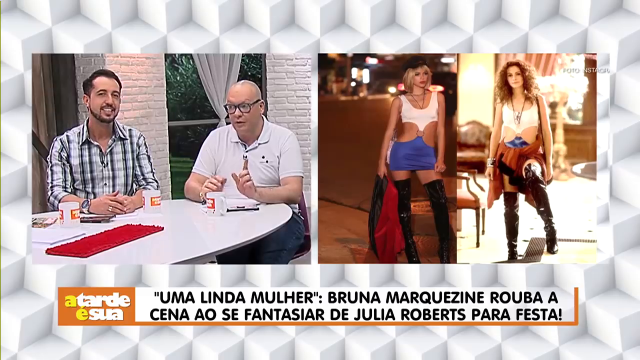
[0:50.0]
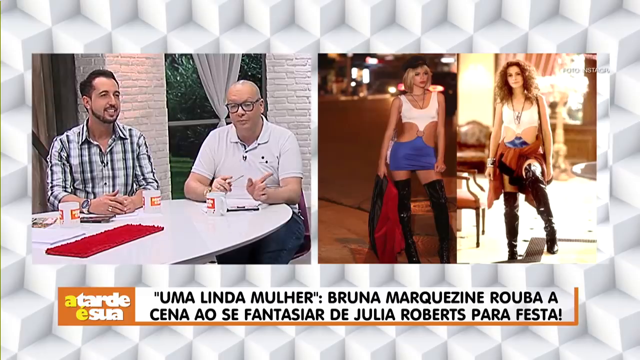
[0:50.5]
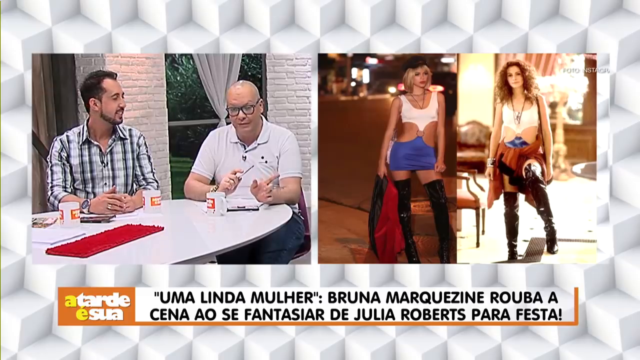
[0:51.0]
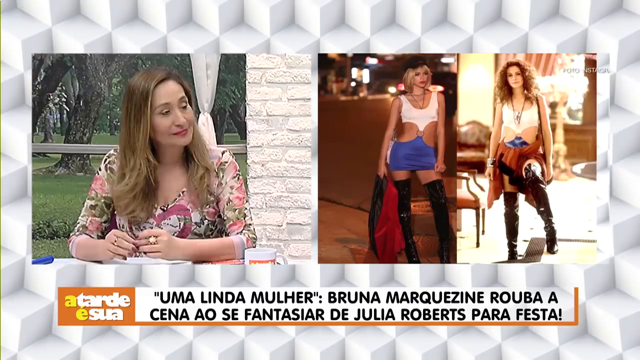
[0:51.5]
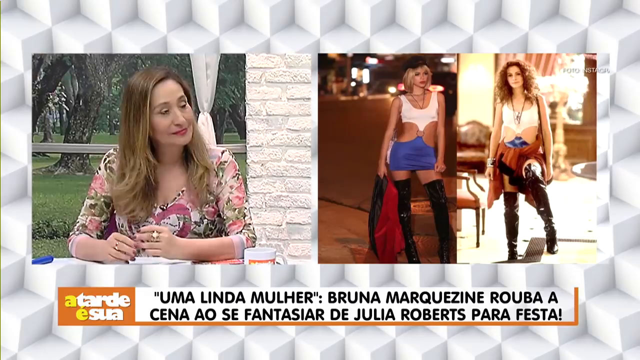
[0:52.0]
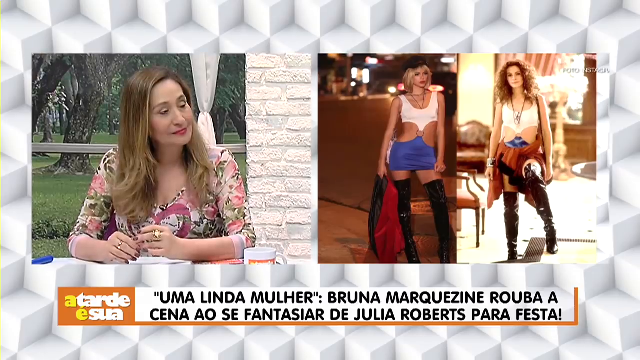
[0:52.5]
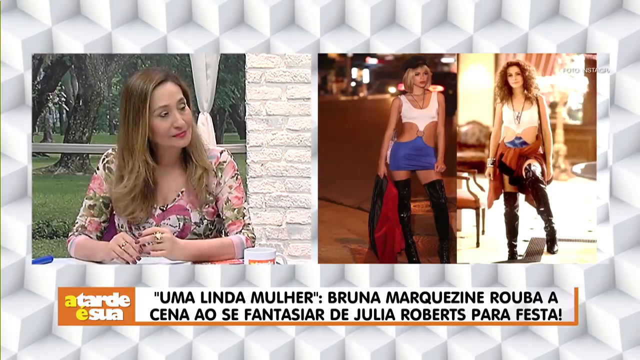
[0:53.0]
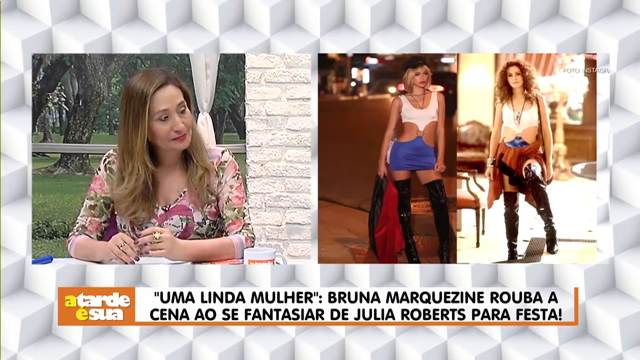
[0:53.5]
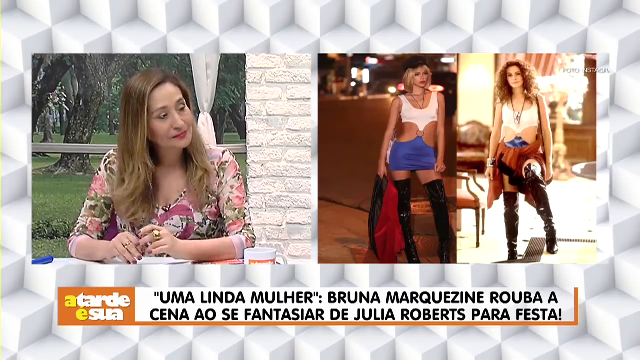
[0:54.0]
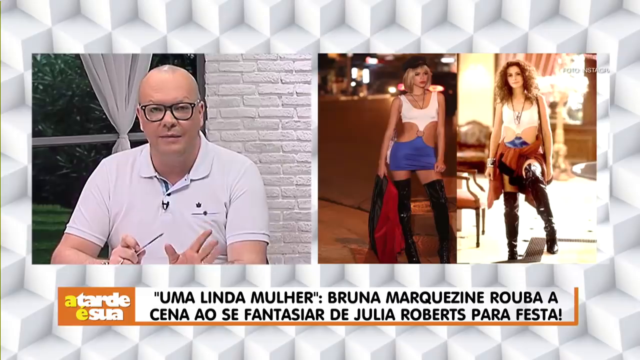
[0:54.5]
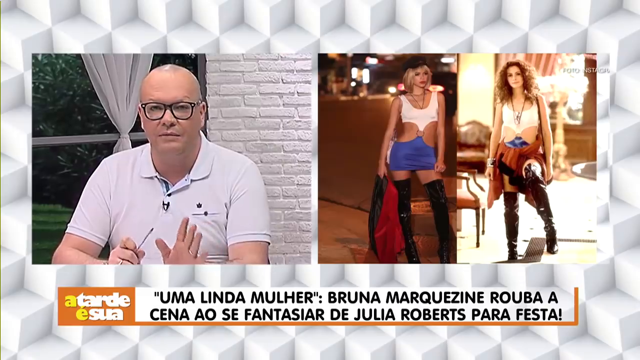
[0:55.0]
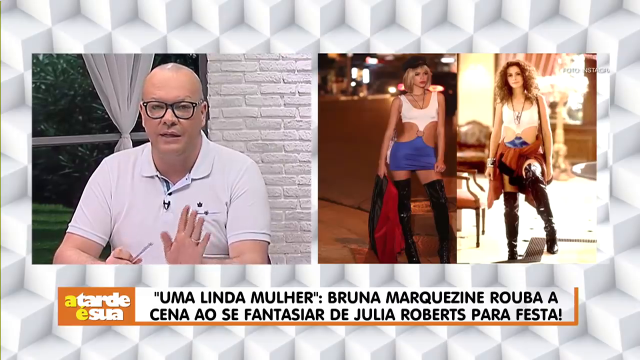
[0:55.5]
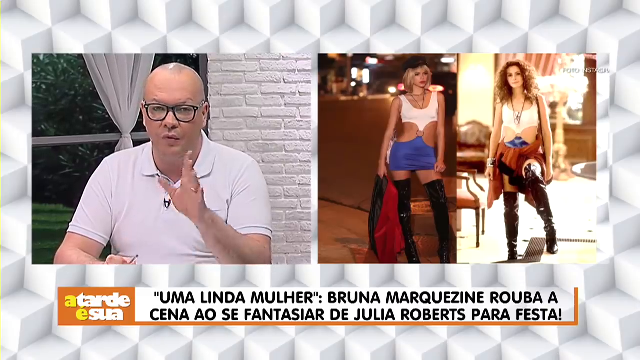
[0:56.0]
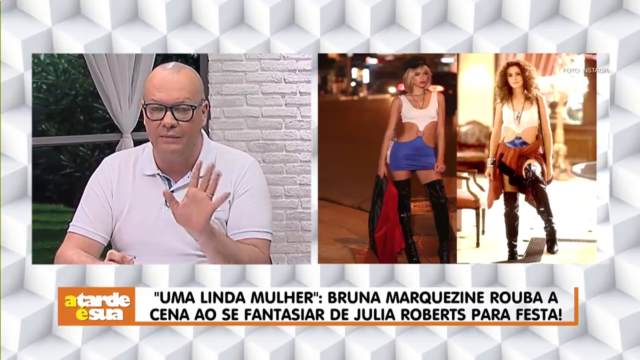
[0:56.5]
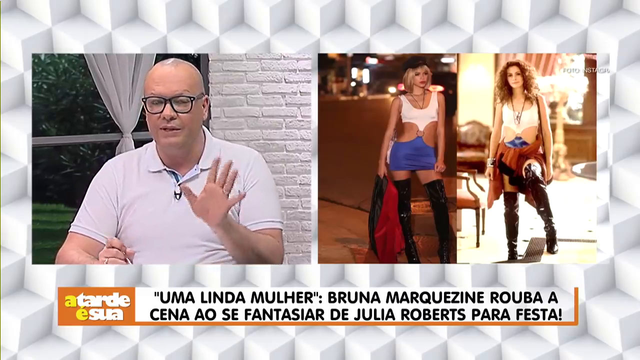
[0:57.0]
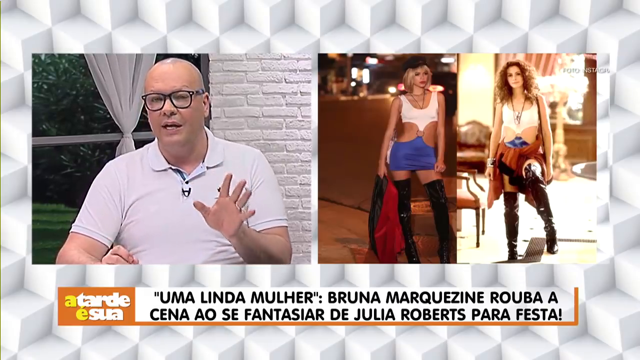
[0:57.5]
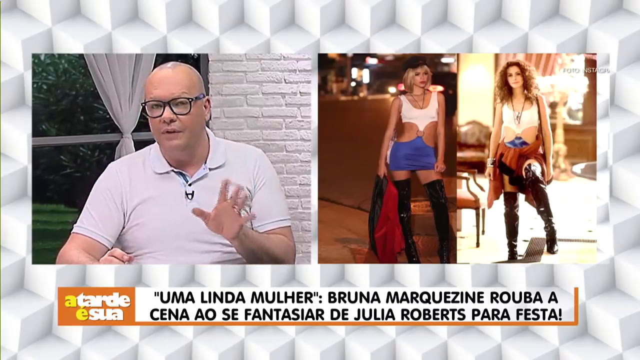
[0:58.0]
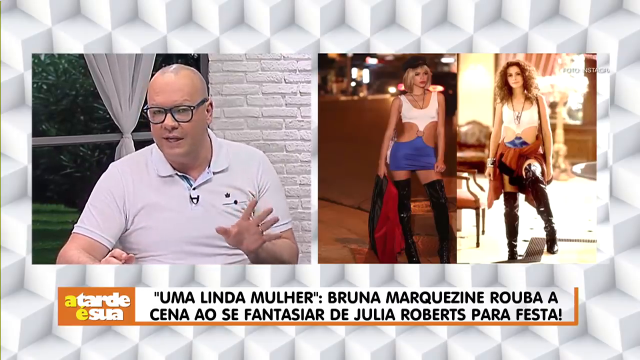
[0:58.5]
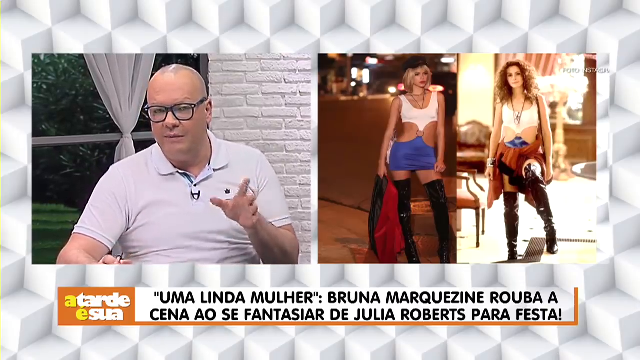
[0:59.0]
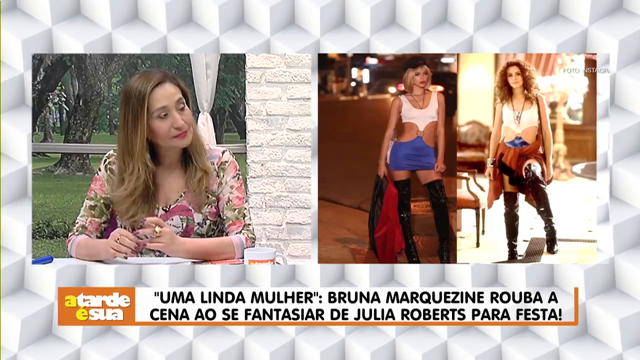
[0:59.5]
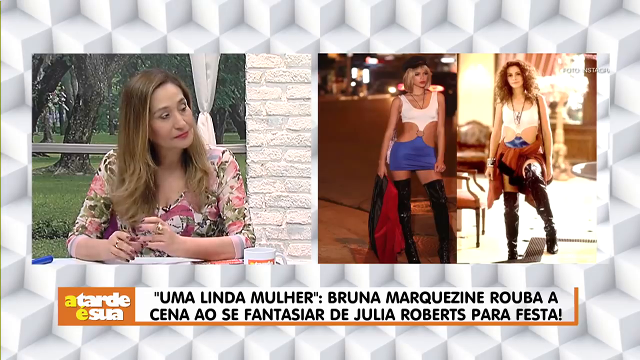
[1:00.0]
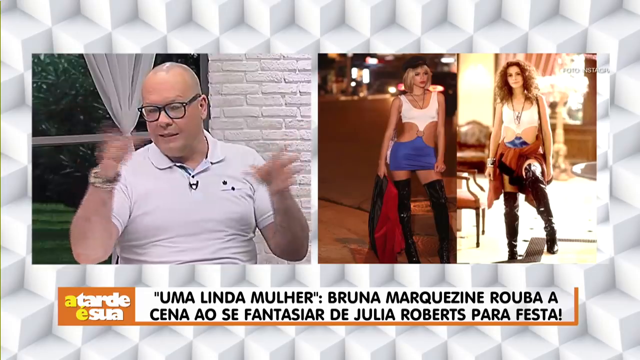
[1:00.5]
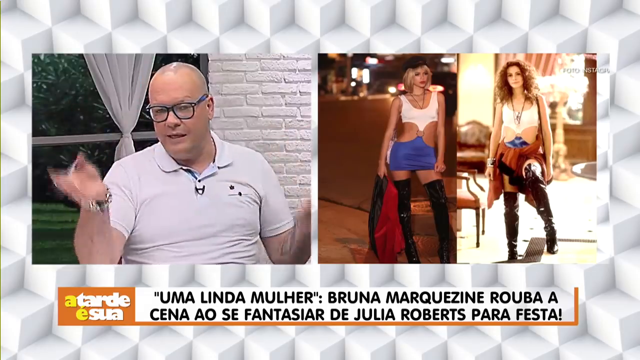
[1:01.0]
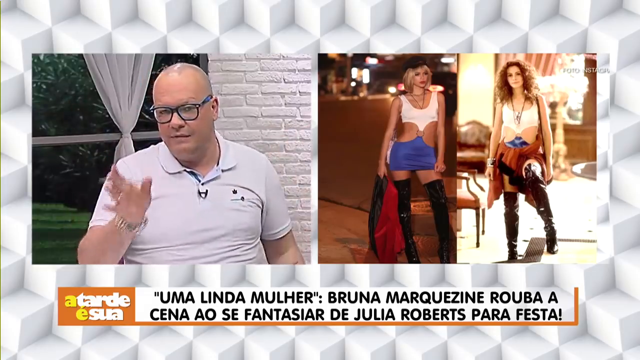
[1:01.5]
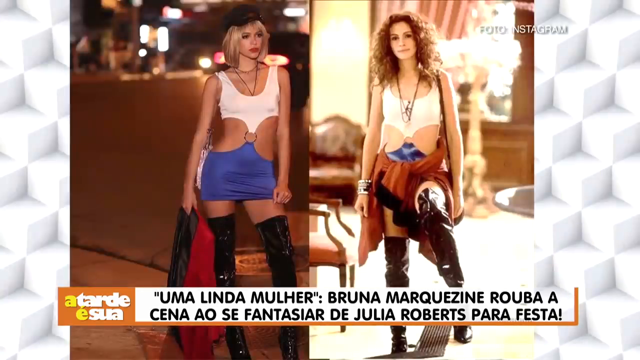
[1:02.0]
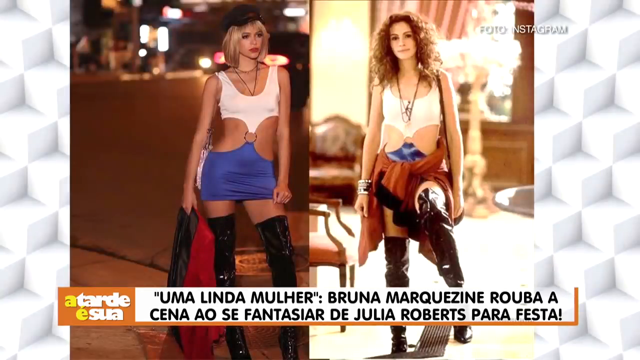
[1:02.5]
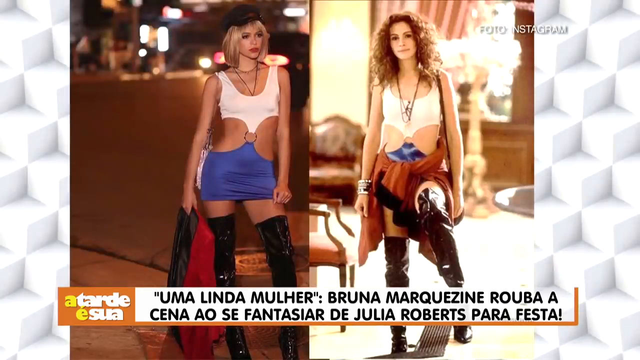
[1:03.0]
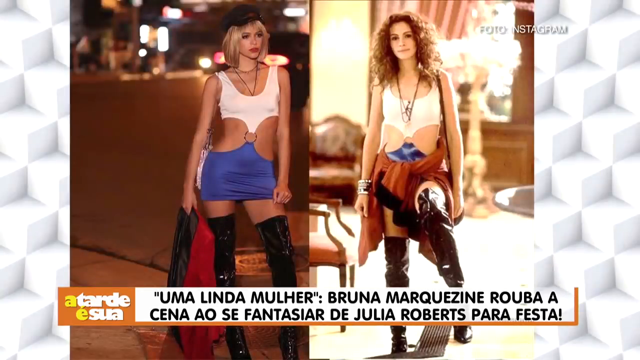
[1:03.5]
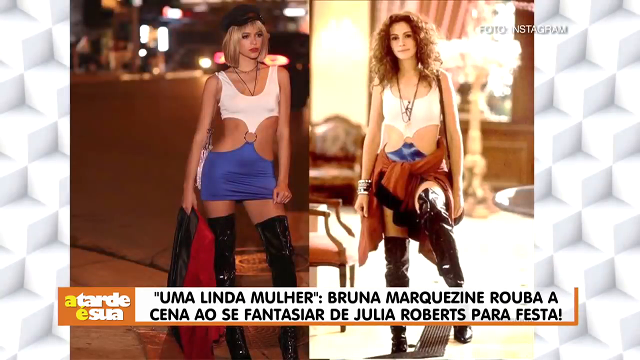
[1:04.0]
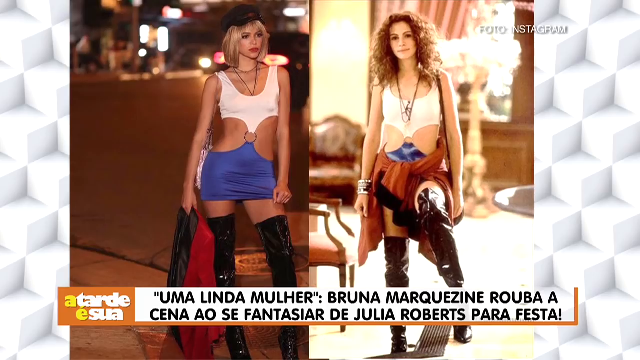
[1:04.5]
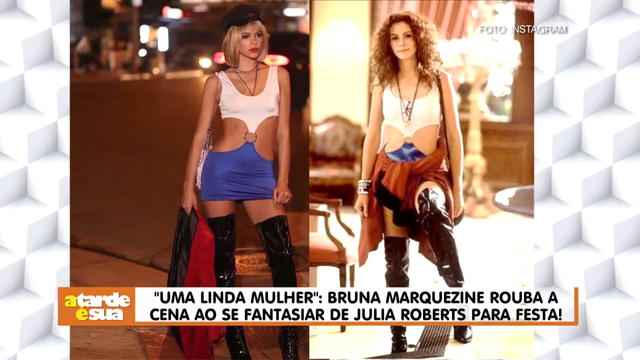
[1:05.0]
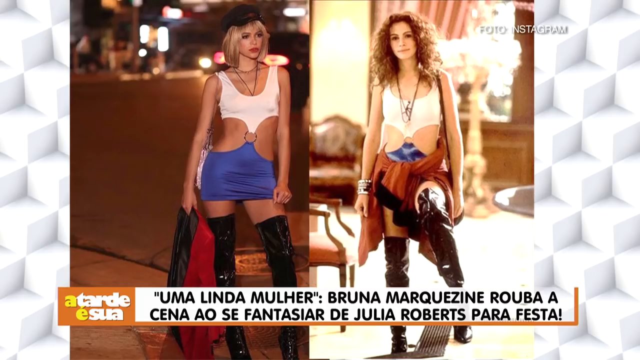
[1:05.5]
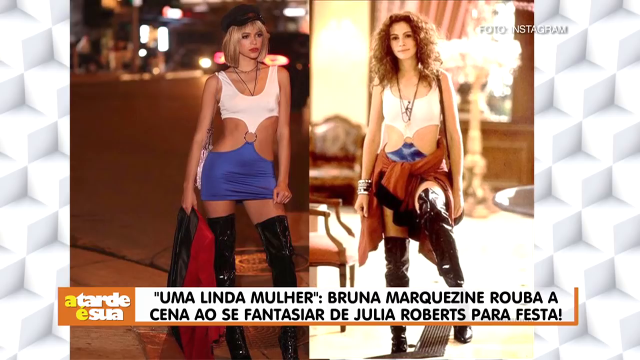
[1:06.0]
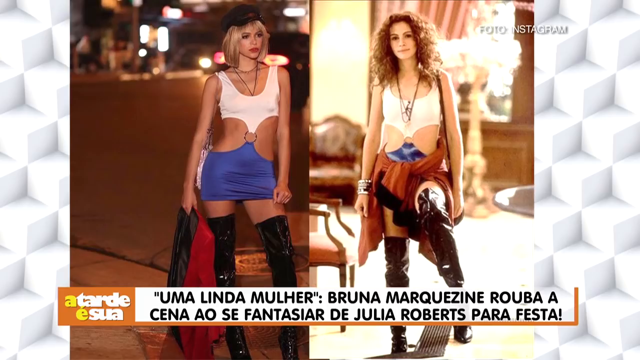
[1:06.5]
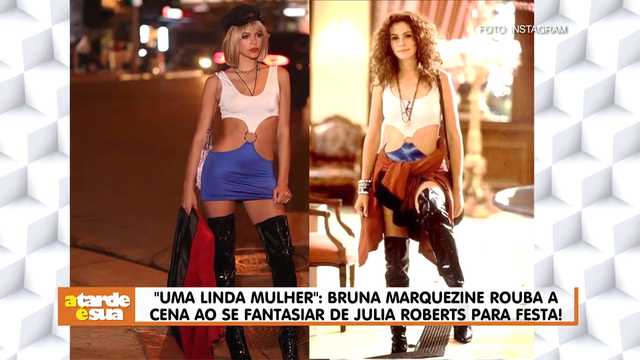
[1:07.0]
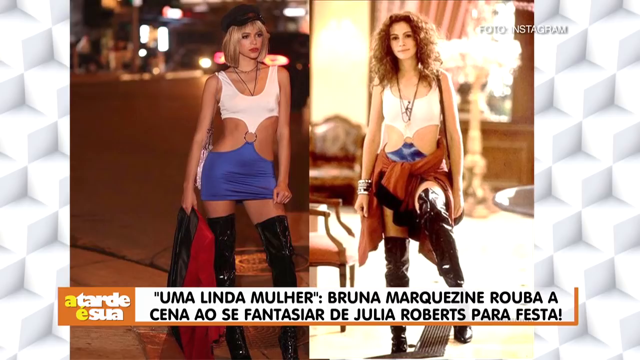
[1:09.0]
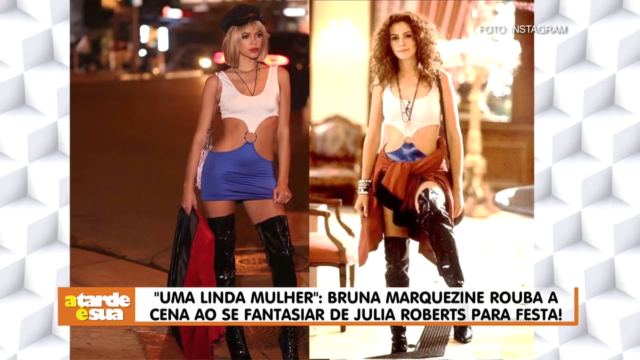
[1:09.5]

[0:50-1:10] A dual shot shows the bald man and the man in the striped shirt on the left, talking, nodding and discussing, with the image of the Julia Roberts imposter next to Julia Roberts from the actual movie still on screen. The bald man talks and points a little. The woman in the floral print dress watches him talk, kind of nodding and listening. The bald man in the white shirt talks again, holding a pen in one hand and making gestures with his left hand. The woman in floral print is still listening and nodding. Then the bald man in the white shirt has both hands in the air, waving them around pretty wildly. A close-in picture of the Julia Roberts imposter and the real Julia Roberts from Pretty Woman follows and stays on screen, unchanged, with text that reads "Uma Linda Mueller" and includes "Julia Roberts".